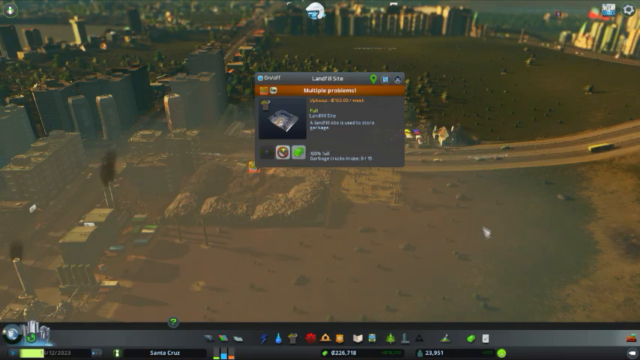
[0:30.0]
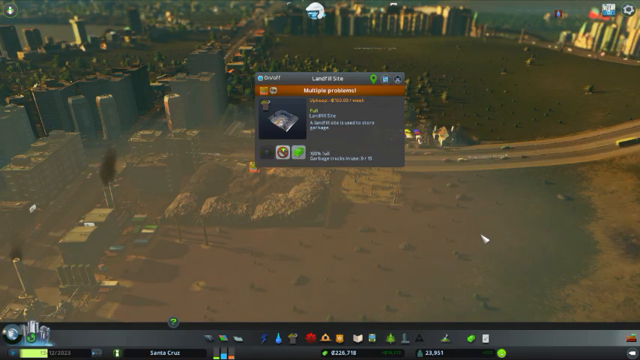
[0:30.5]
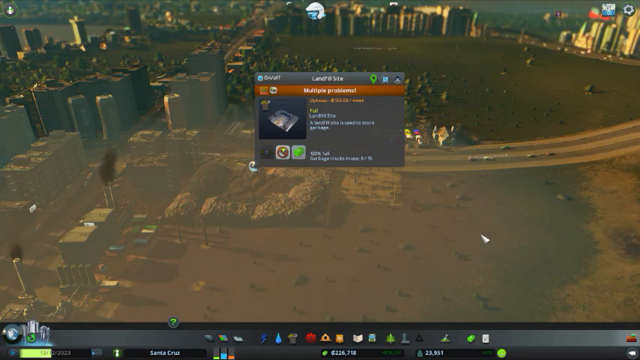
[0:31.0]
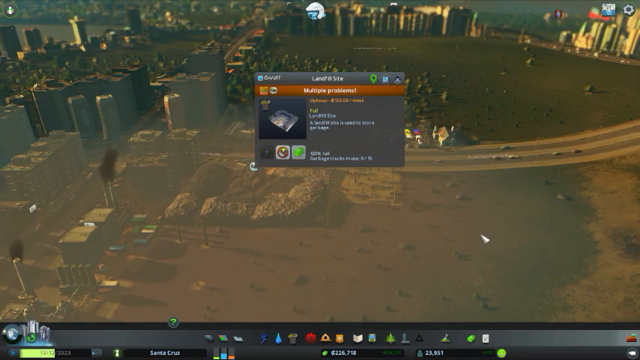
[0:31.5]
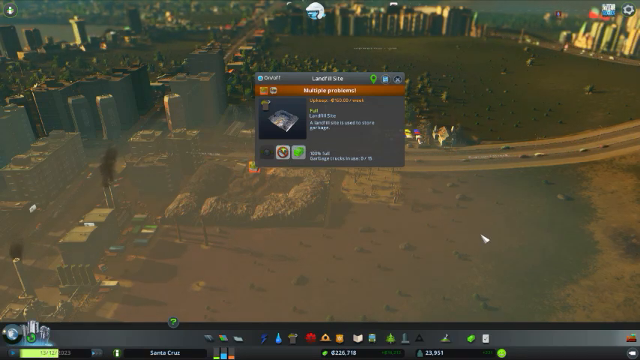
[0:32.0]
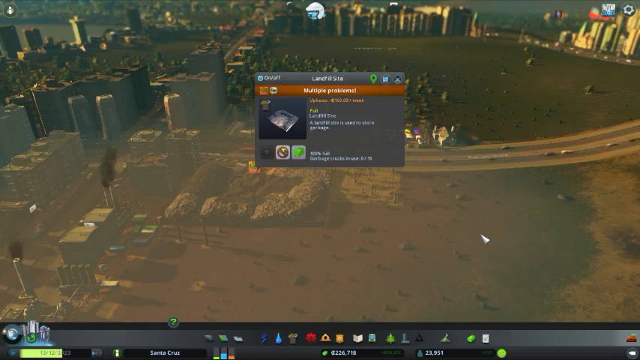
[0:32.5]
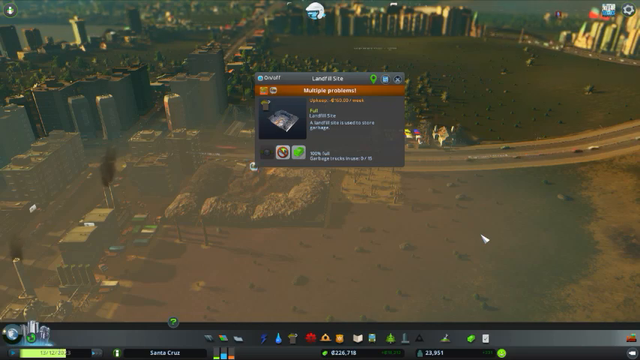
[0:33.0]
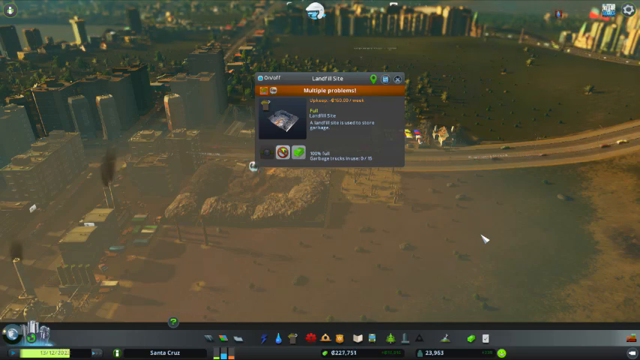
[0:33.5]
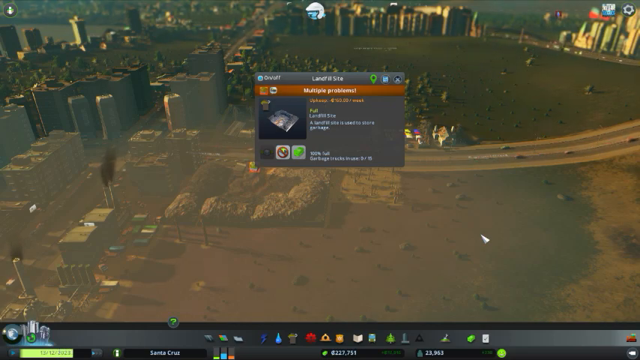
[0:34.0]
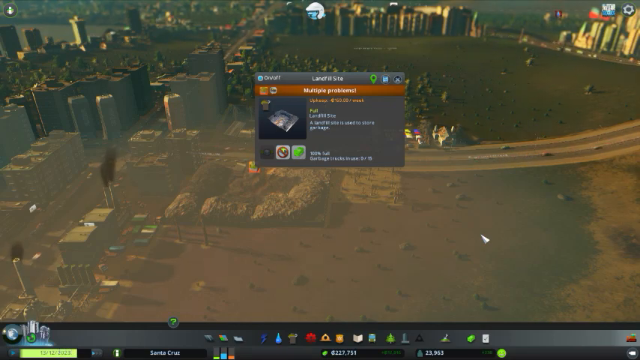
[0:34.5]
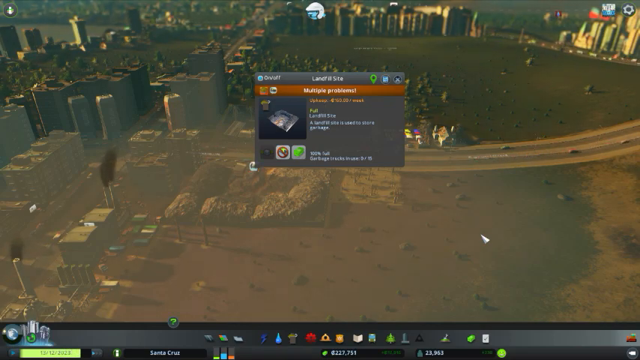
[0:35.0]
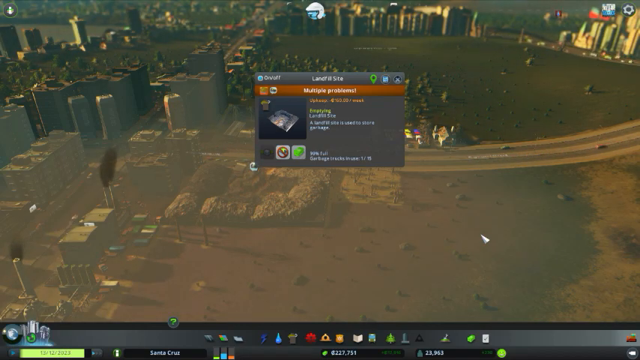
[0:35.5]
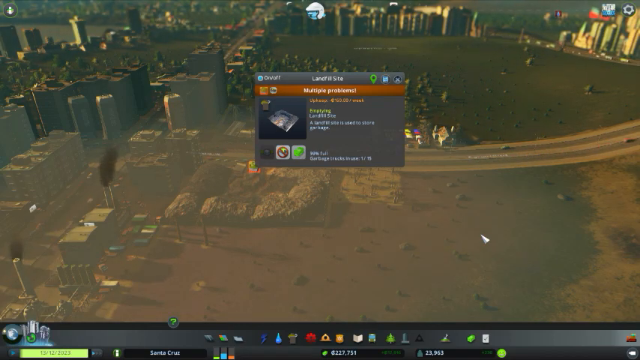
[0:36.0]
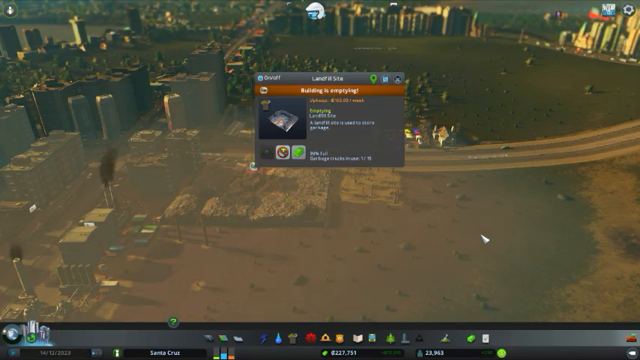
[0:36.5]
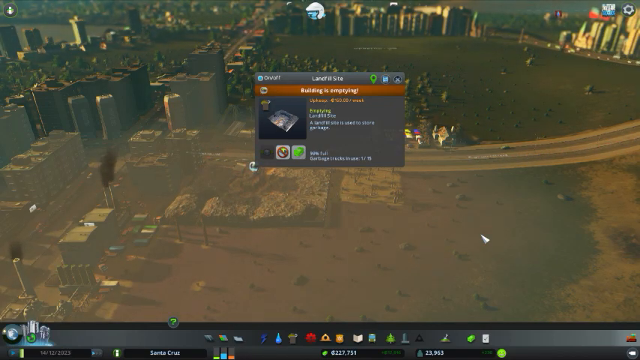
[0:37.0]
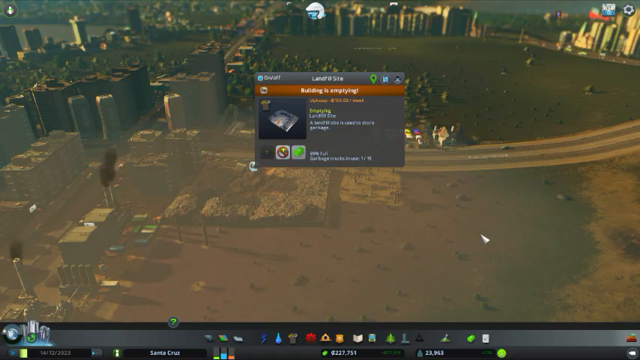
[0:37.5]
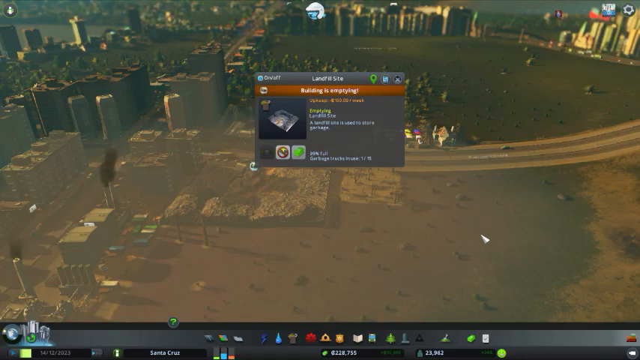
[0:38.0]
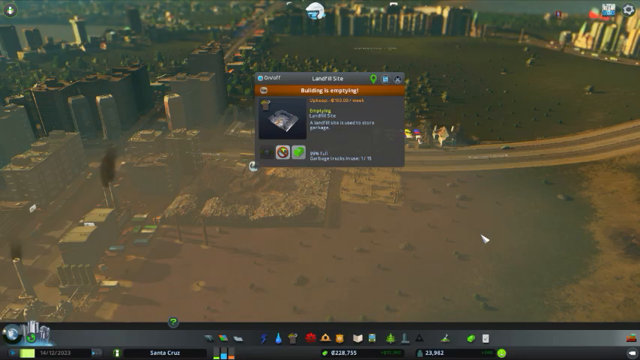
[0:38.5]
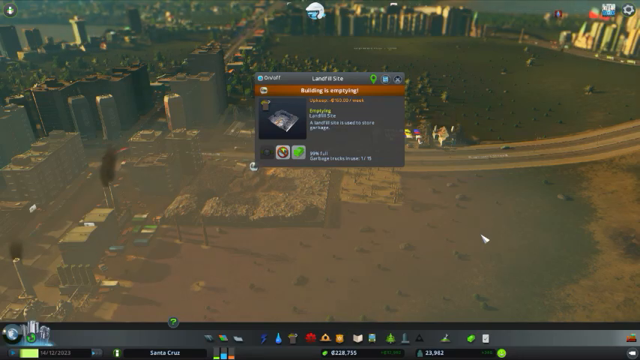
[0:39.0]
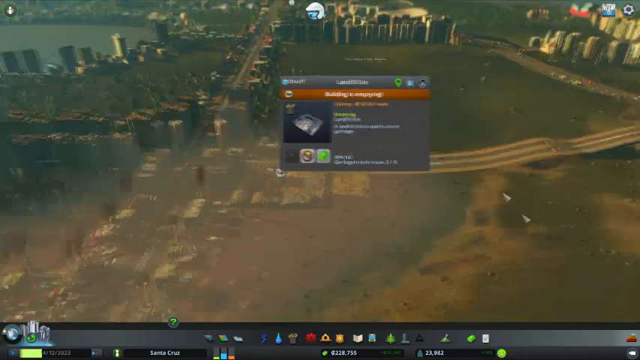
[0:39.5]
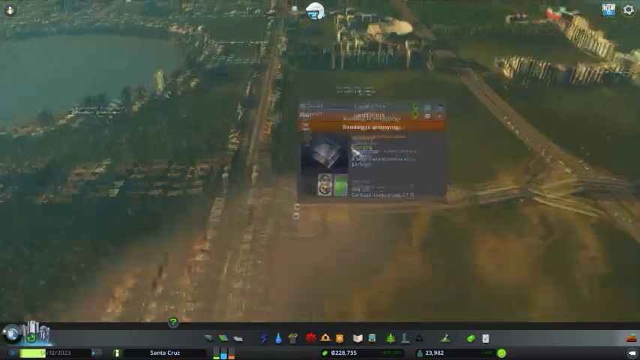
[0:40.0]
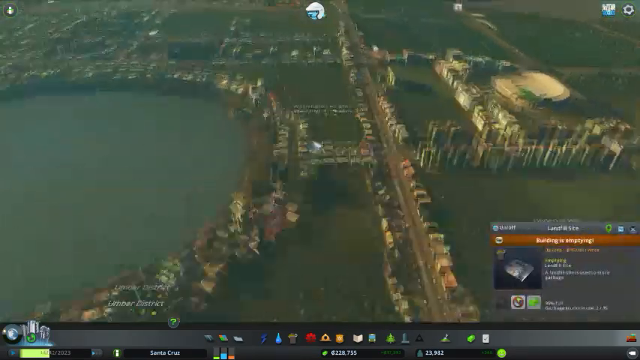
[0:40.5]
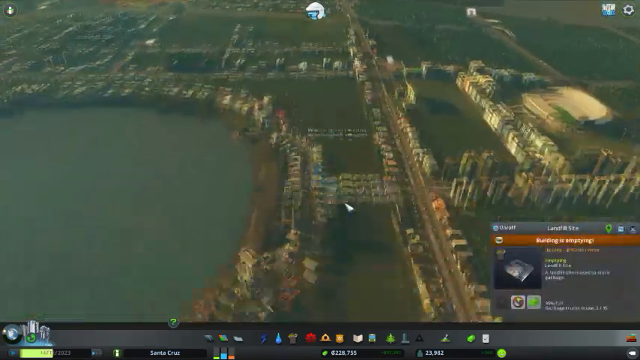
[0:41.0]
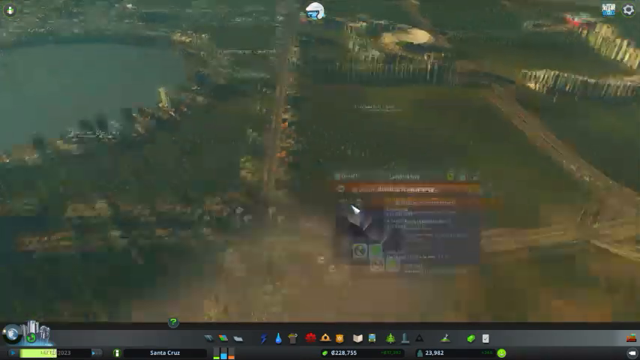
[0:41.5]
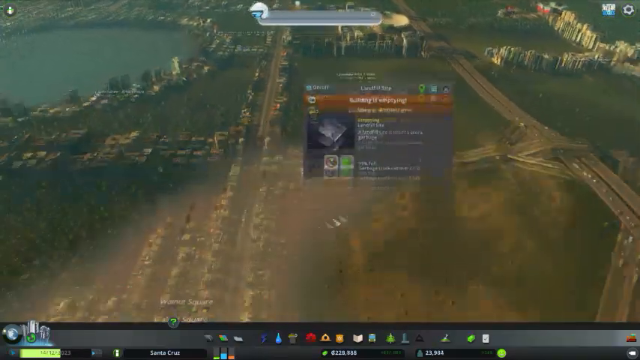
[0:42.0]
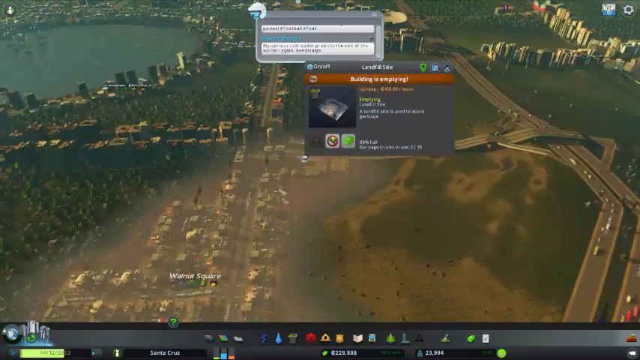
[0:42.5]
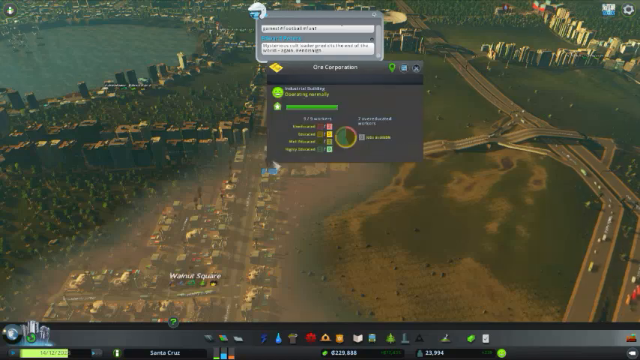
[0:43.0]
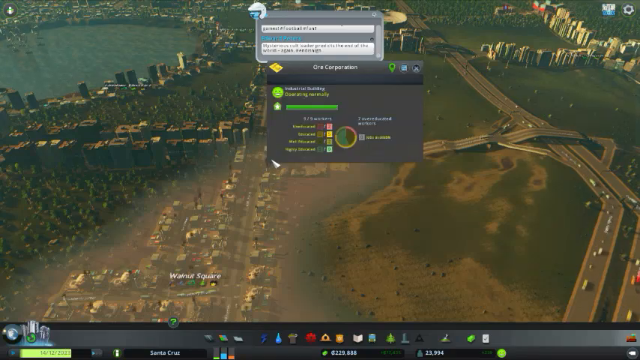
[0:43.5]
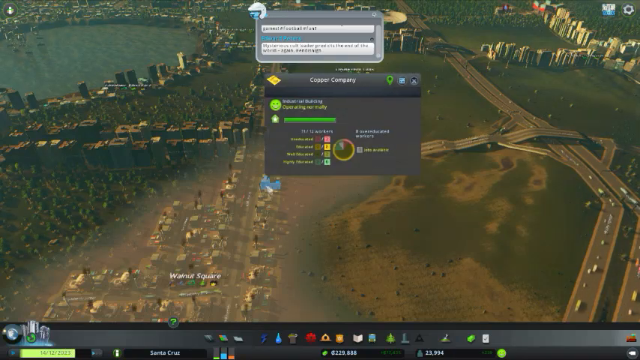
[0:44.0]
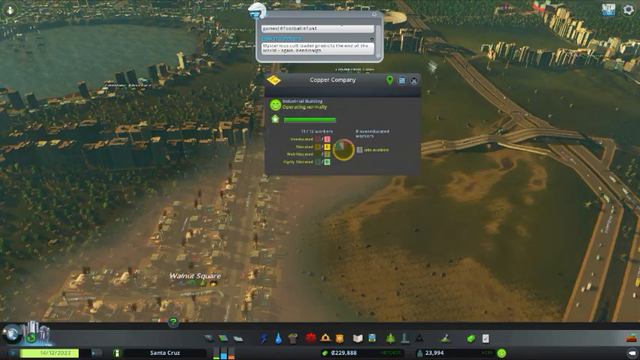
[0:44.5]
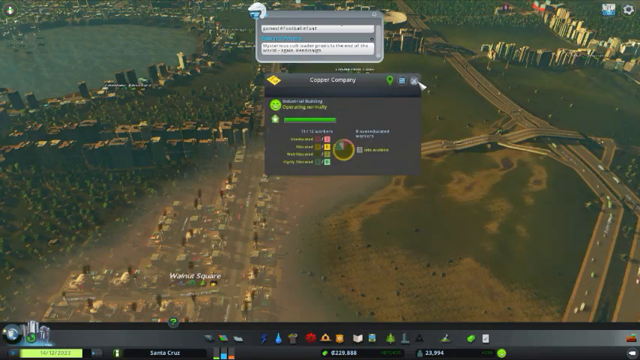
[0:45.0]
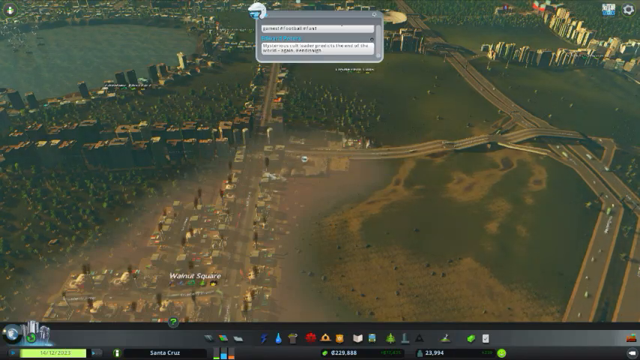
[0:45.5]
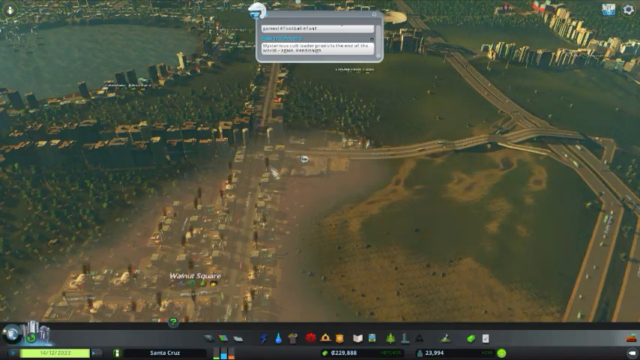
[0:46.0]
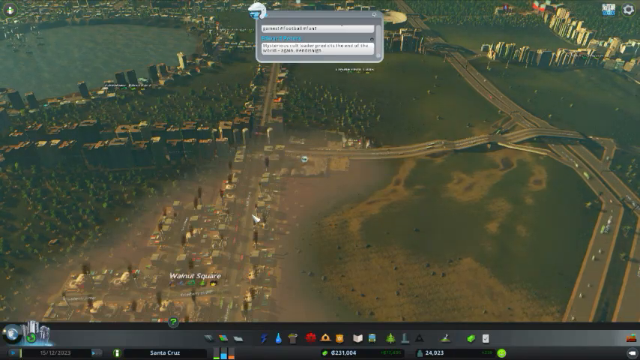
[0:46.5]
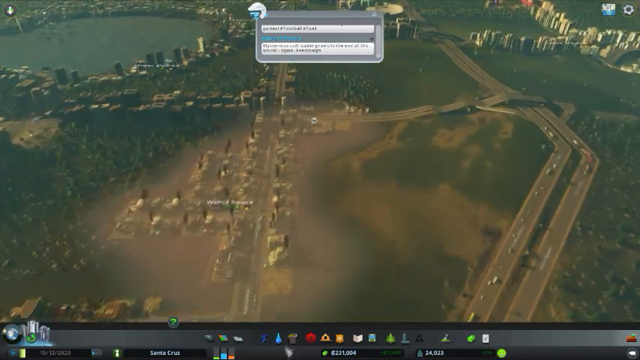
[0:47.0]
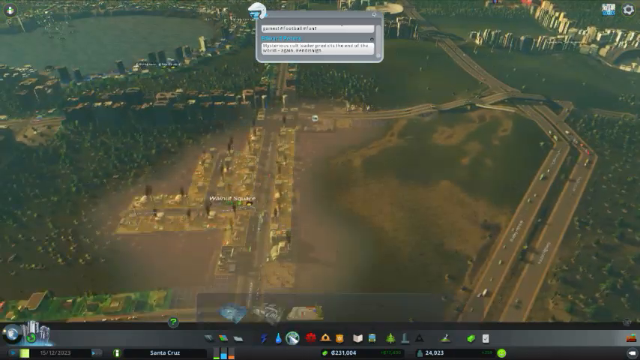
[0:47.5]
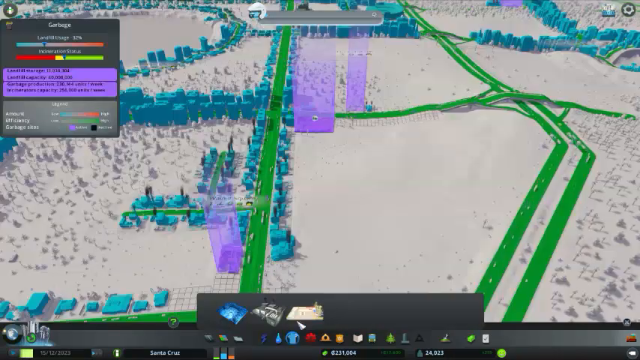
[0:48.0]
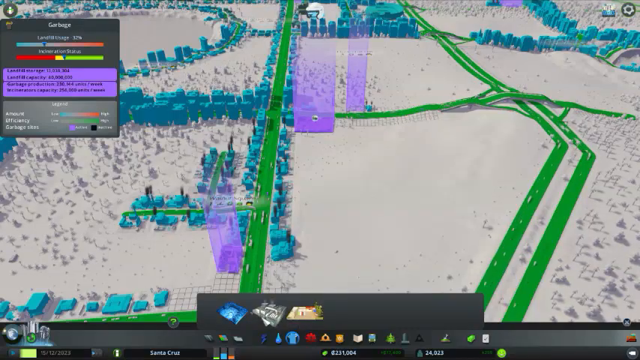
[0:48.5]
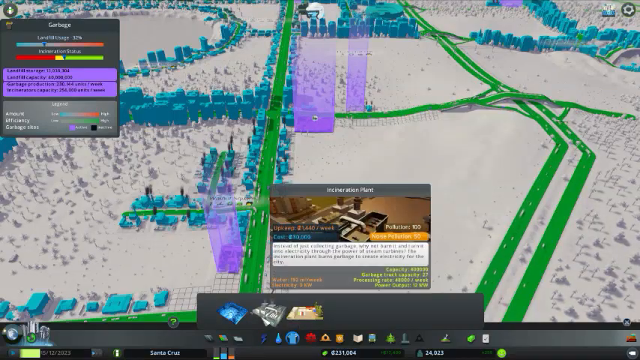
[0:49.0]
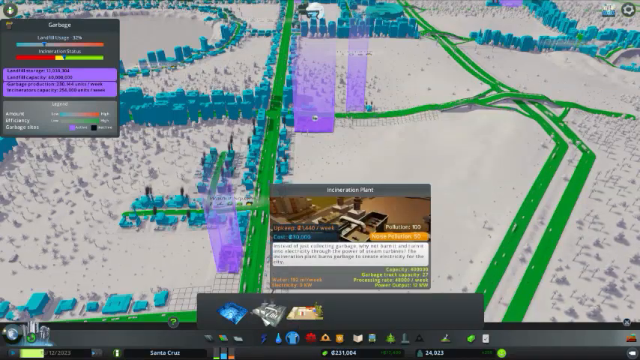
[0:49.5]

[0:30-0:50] In the same area of the video game, a pop-up box with a grayish background, slightly transparent on its bottom half, is in the middle of the screen. At its top middle it says "Landfill Site", and below that, in an orange rectangular box, "multiple problems" appears in white text. To the left, in an even smaller box, is a small image of a landfill site. In the background, the top half is largely green with many large green trees, and buildings are shown primarily at the bottom left, one of them with black smoke coming out of it. A road runs horizontally from left to right through the direct middle, and cars move both left and right as well as vertically downwards. The person clicks the landfill site, which sort of drops it down a little, then zooms outwards; the landfill site pop-up moves to the bottom right, and another pop-up with a sort of text display appears at the top middle. They exit the landfill site pop-up as they sort of click another button at the bottom left, and the whole city and forest landscape changes to white and blue, with large purple highlighted boxes appearing. At the end, they hover over an area.